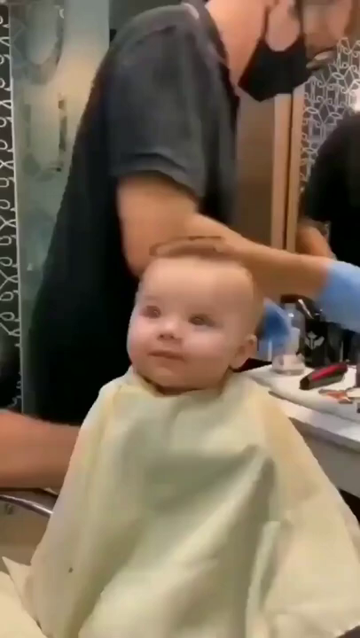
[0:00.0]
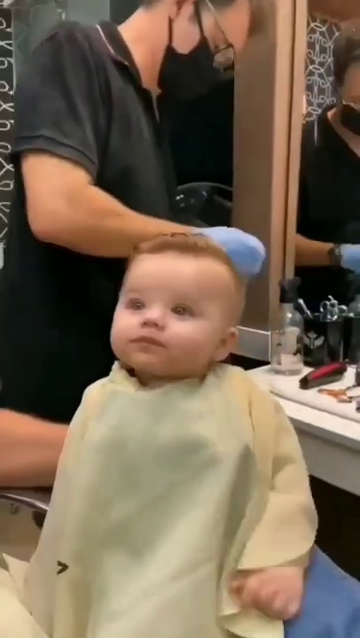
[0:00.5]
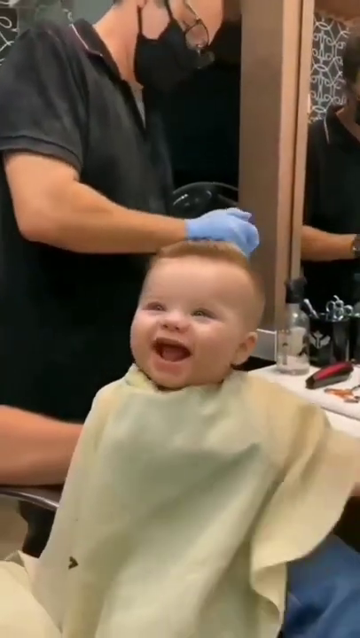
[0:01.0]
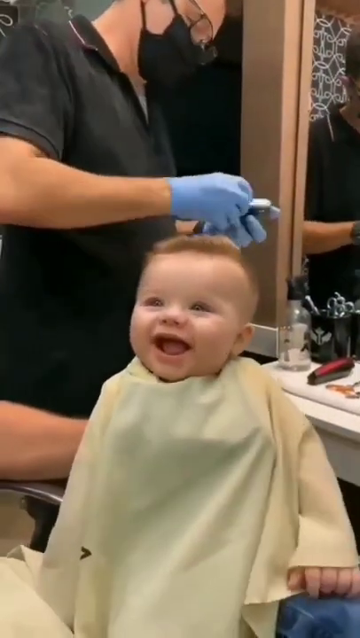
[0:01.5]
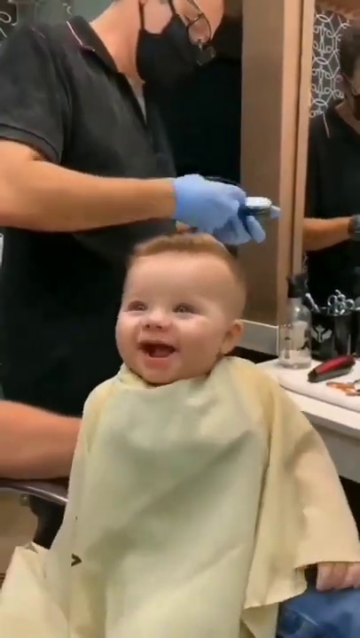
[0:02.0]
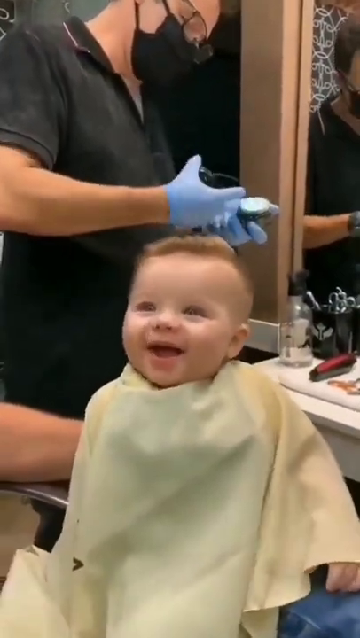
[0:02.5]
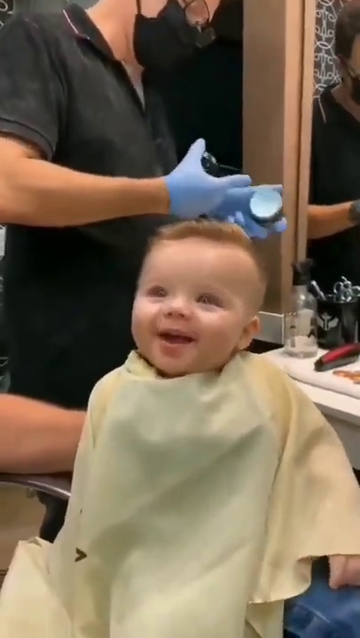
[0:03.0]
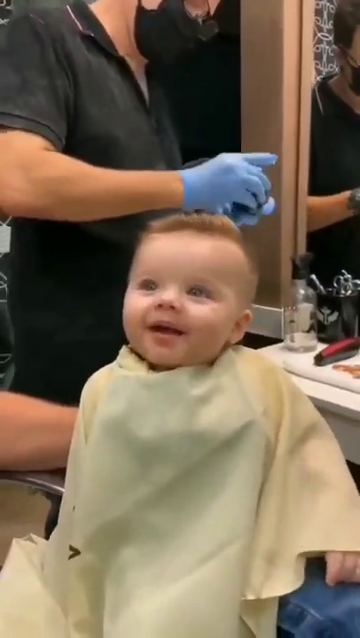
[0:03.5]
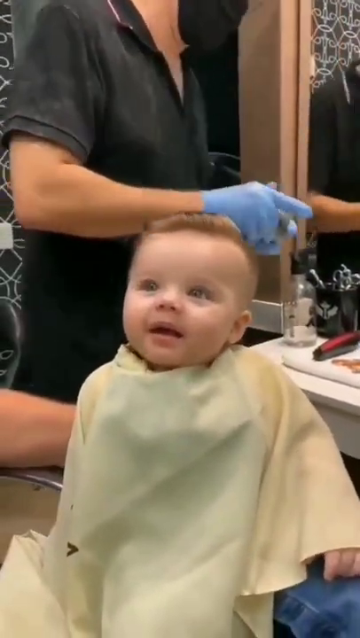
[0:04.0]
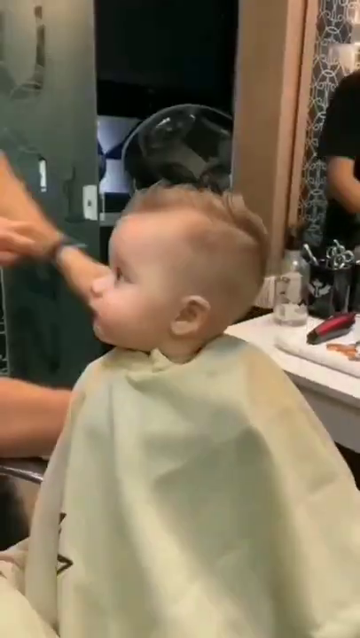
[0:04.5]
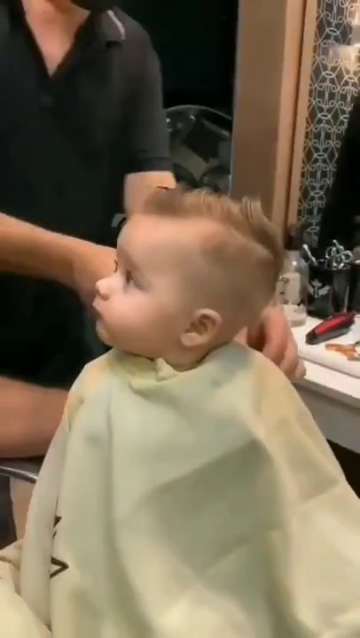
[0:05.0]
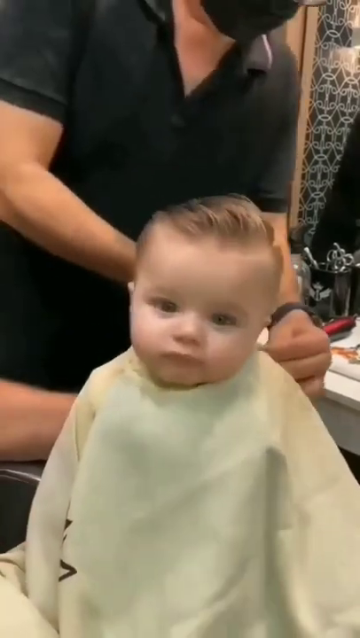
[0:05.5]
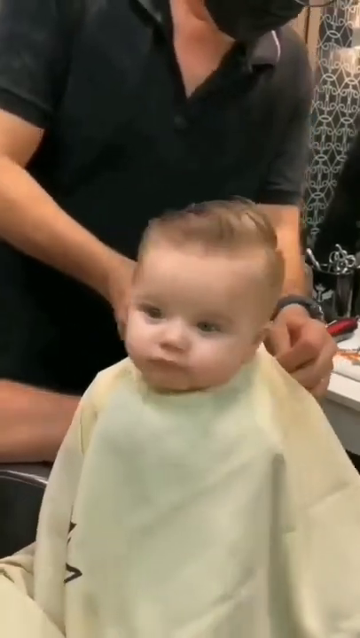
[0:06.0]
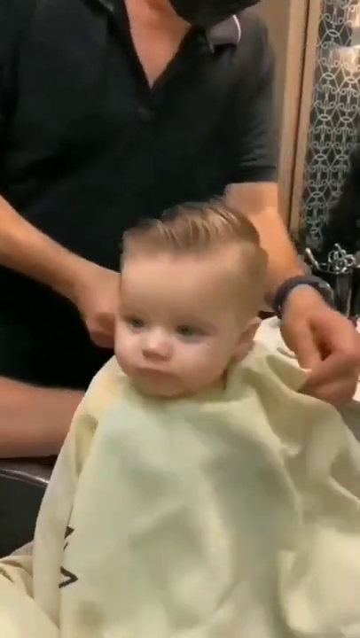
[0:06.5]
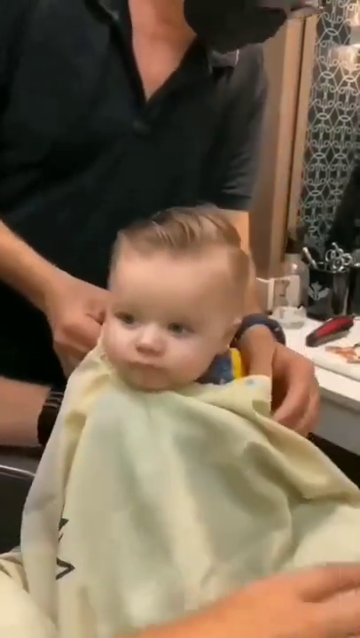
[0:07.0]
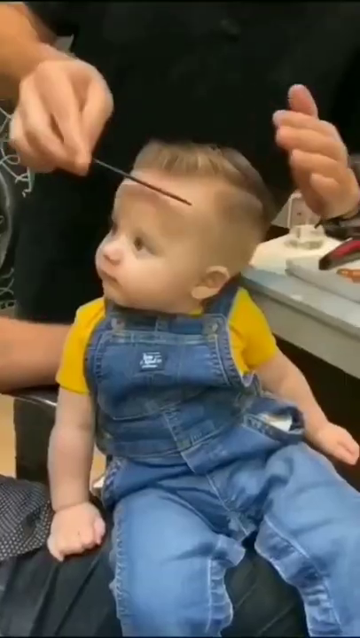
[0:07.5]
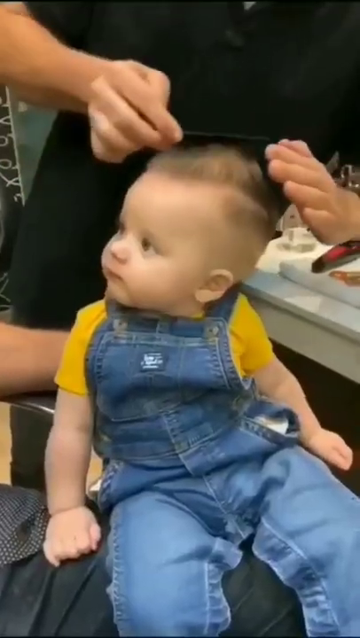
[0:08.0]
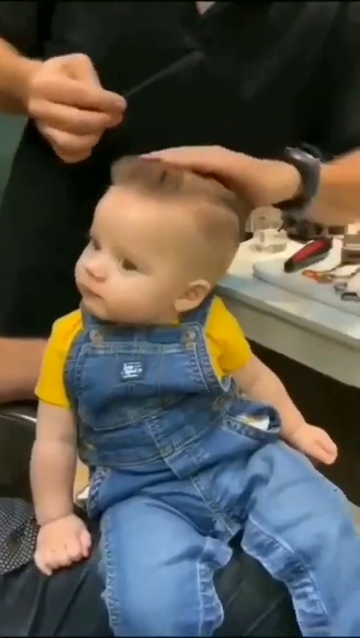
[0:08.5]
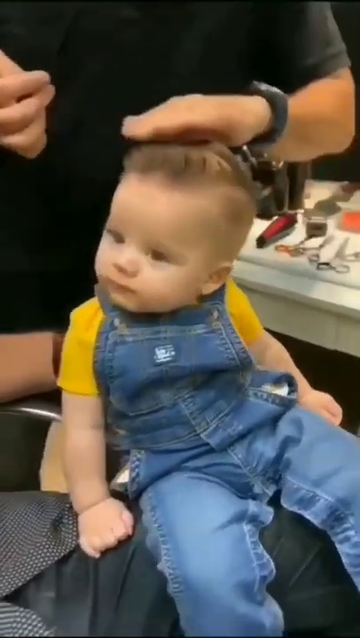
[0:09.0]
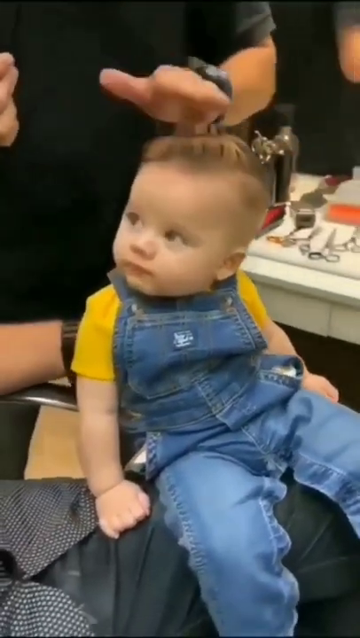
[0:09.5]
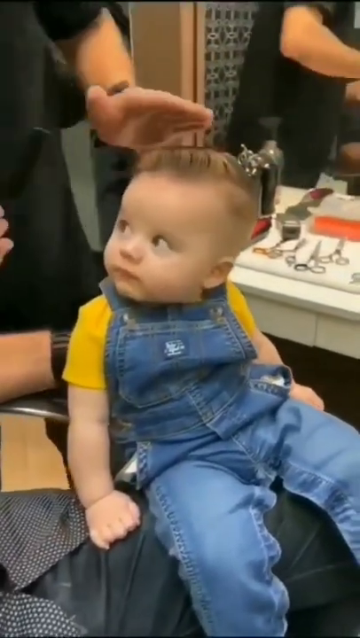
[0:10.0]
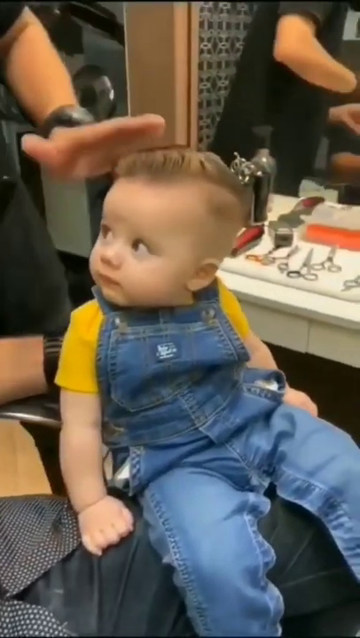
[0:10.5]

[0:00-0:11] A little boy is getting a haircut. At the start, the boy looks very excited, smiling and laughing at someone off camera. It appears to be the end of his haircut: the sides are freshly shaved, and the rest of his hair, roughly a light blondish-brown color, has been slicked back. The cape that was protecting his clothes from the cut hair is removed from around him, revealing his outfit of a yellow shirt with blue overalls. After the cape is removed, the hairstylist uses a black comb to comb his hair back a bit more, then uses his hand to push the hair forward slightly and give it a little more body. By this point the boy is no longer smiling; he is sitting with a neutral facial expression, looking up at an individual off camera, on whose lap he also appears to be sitting.